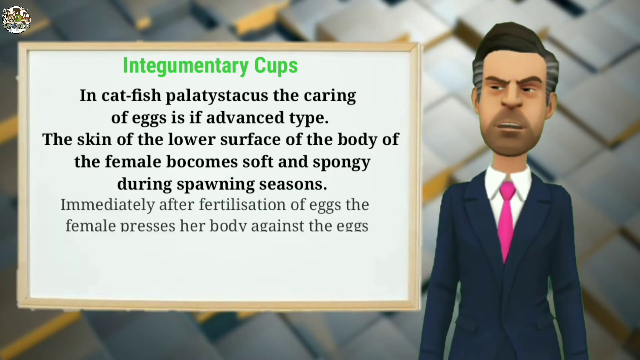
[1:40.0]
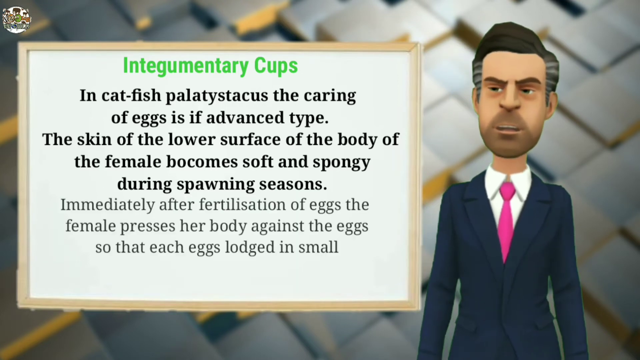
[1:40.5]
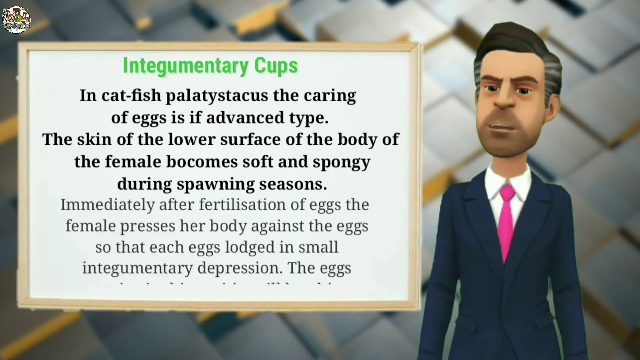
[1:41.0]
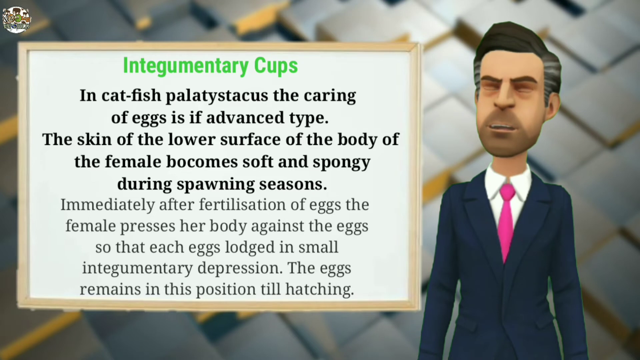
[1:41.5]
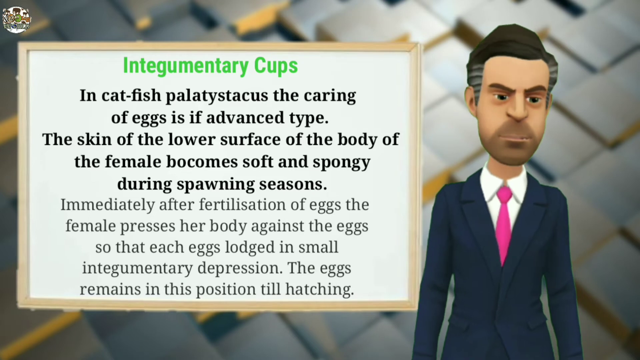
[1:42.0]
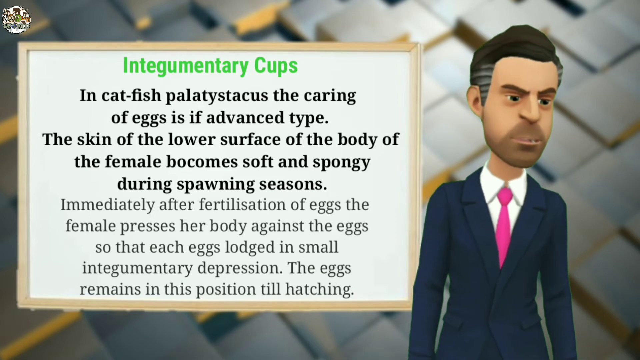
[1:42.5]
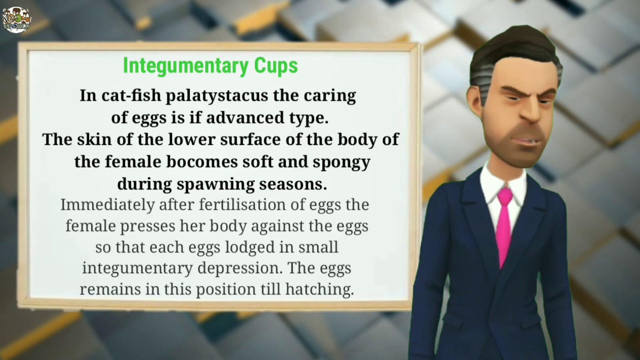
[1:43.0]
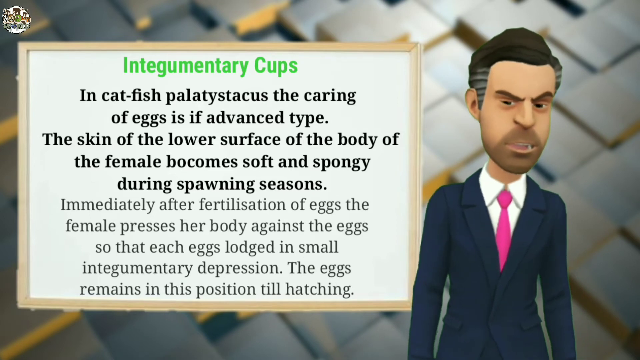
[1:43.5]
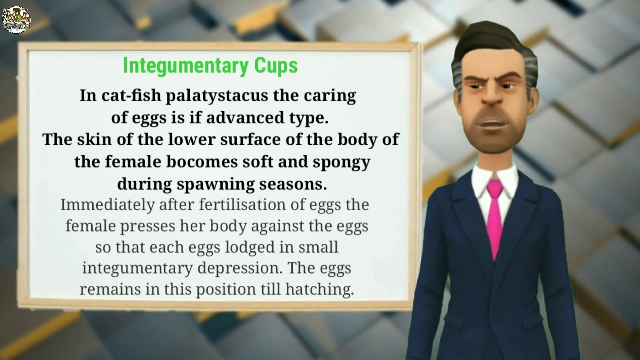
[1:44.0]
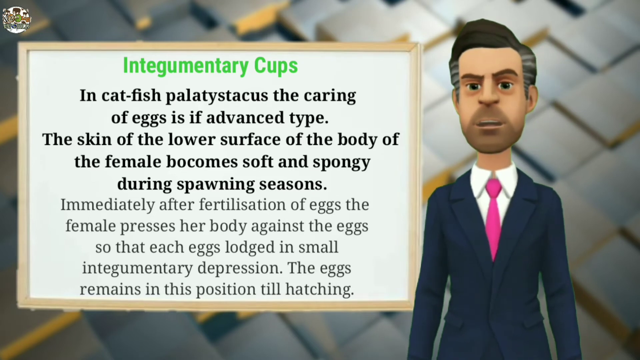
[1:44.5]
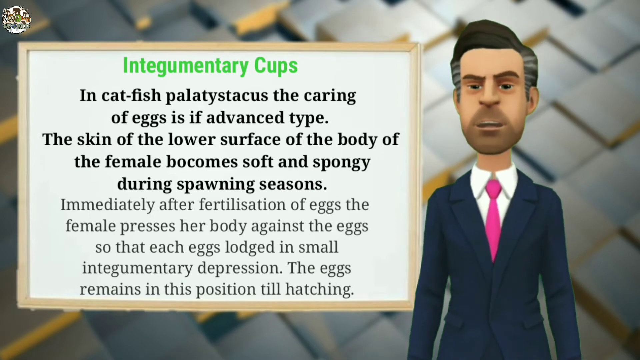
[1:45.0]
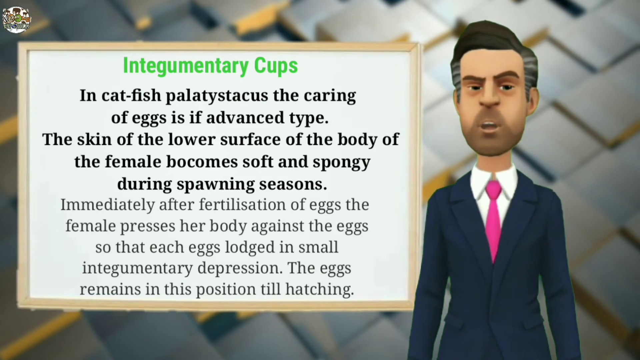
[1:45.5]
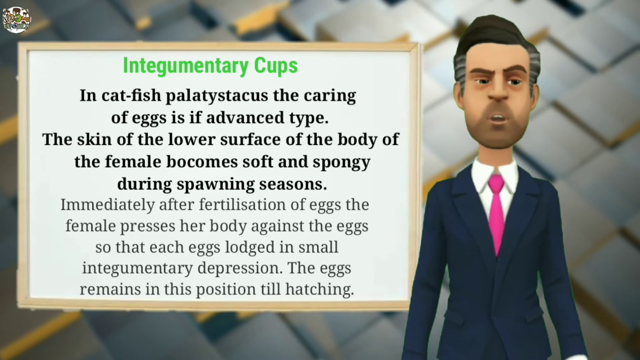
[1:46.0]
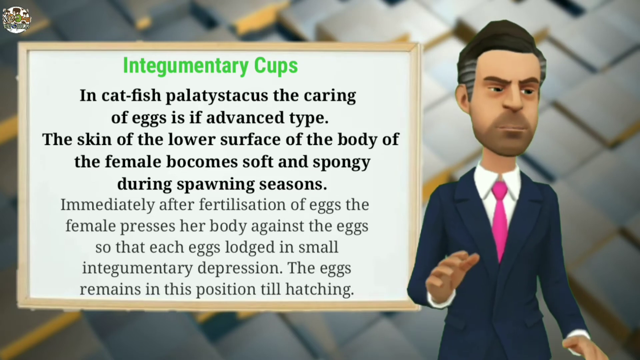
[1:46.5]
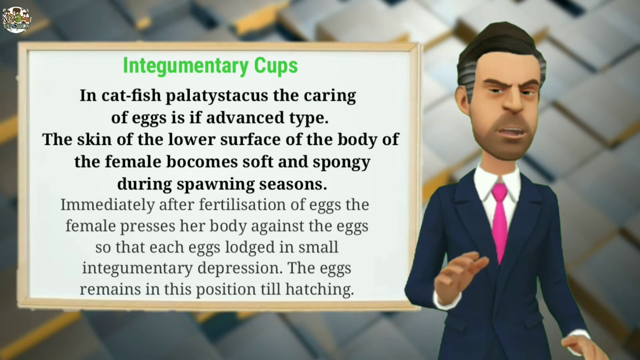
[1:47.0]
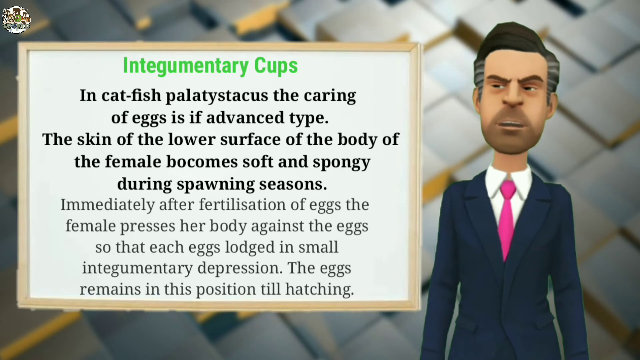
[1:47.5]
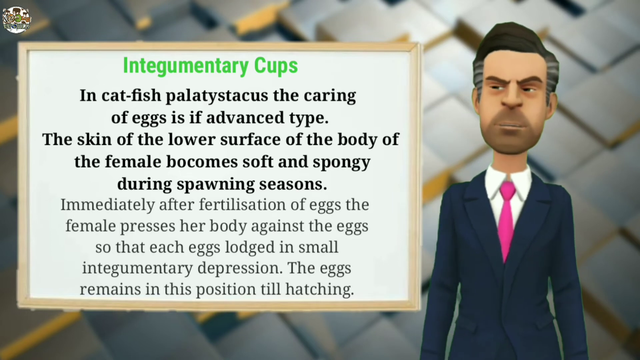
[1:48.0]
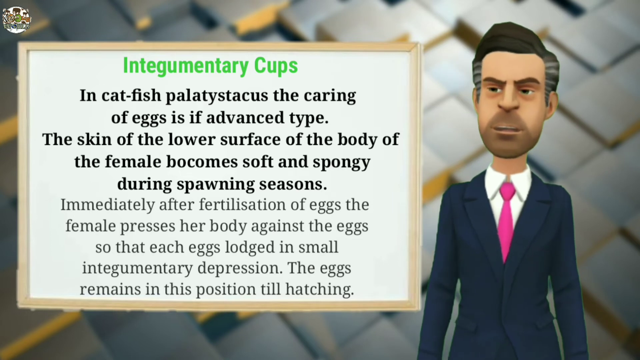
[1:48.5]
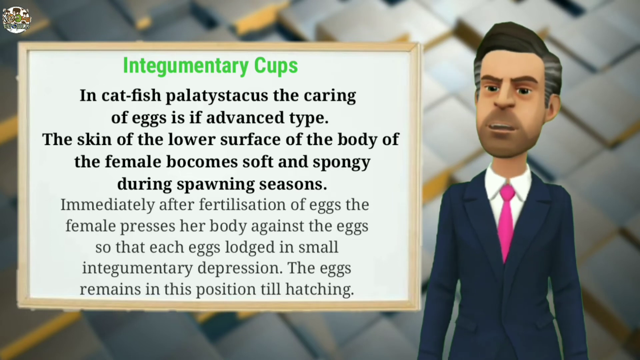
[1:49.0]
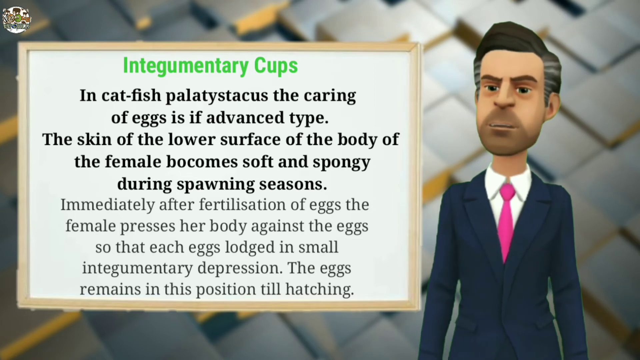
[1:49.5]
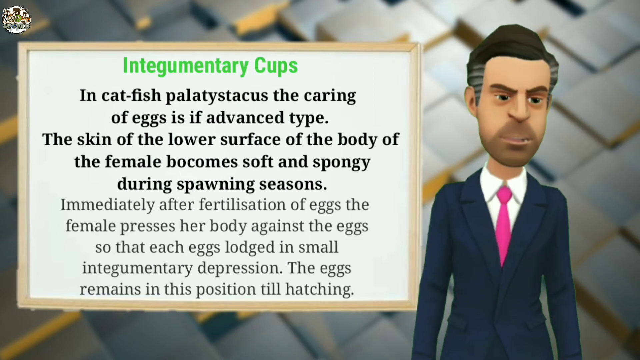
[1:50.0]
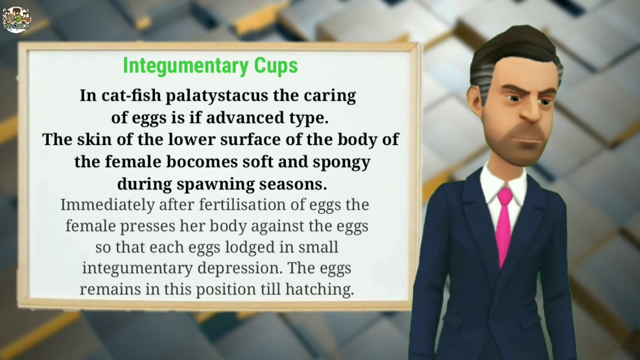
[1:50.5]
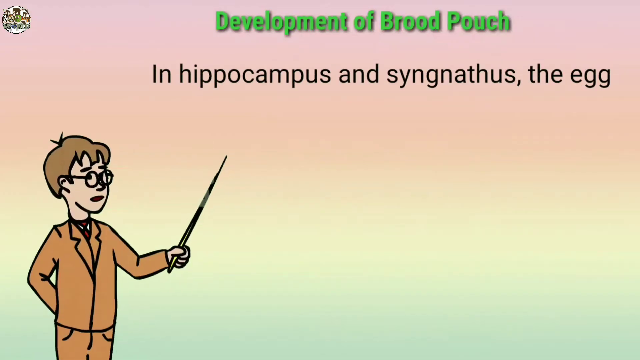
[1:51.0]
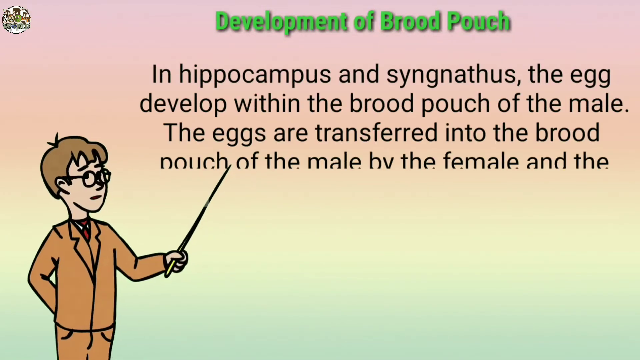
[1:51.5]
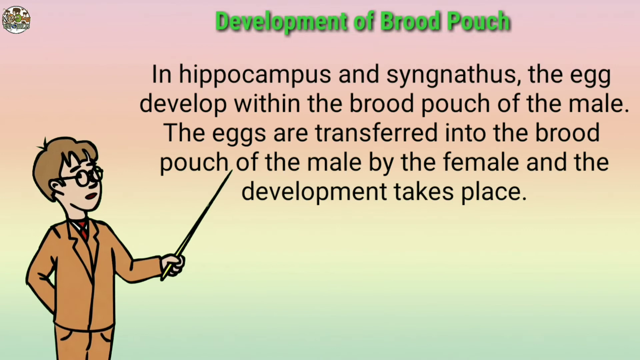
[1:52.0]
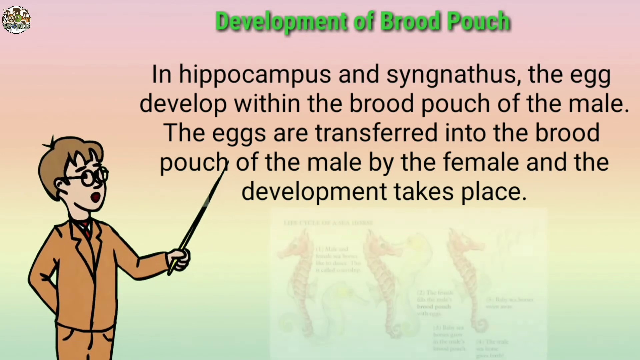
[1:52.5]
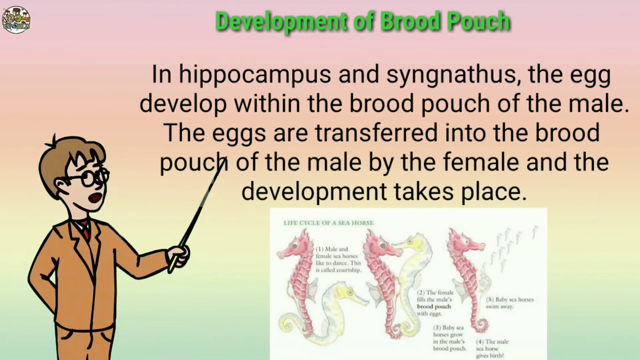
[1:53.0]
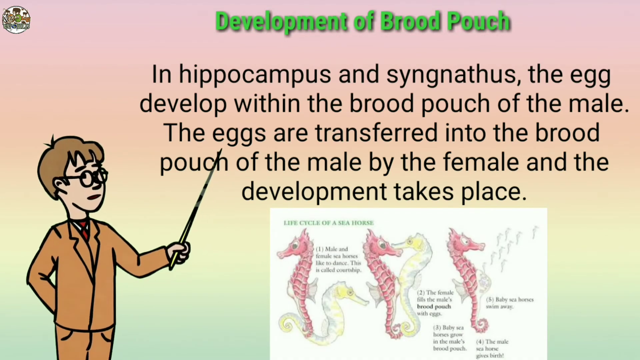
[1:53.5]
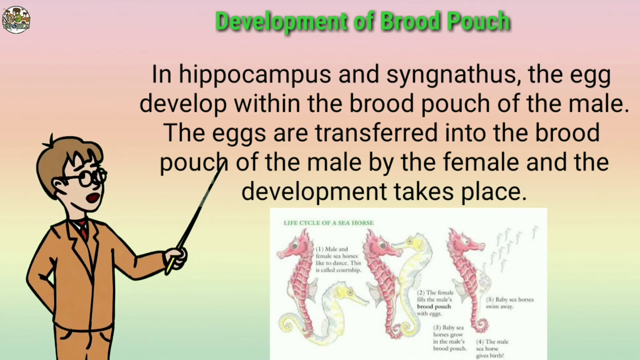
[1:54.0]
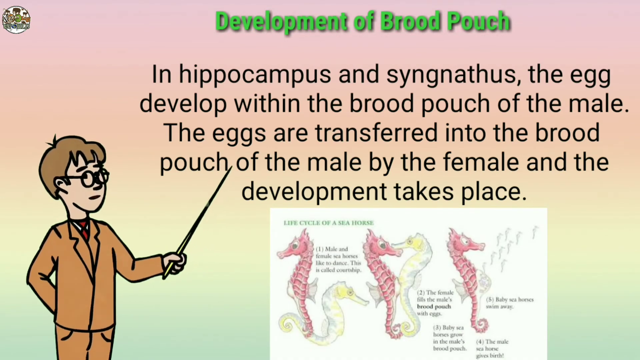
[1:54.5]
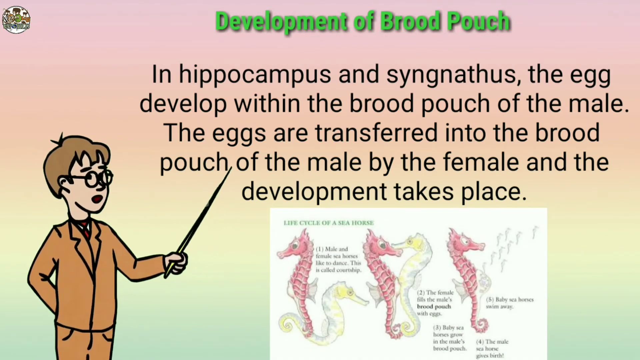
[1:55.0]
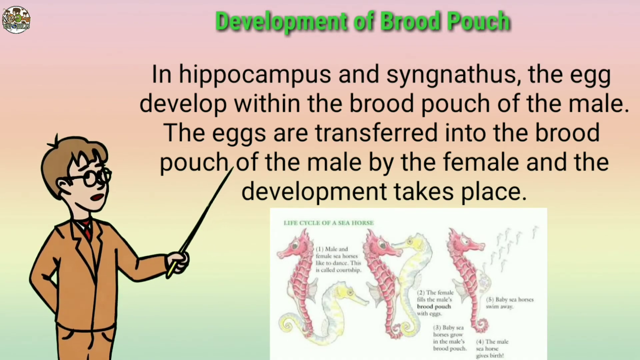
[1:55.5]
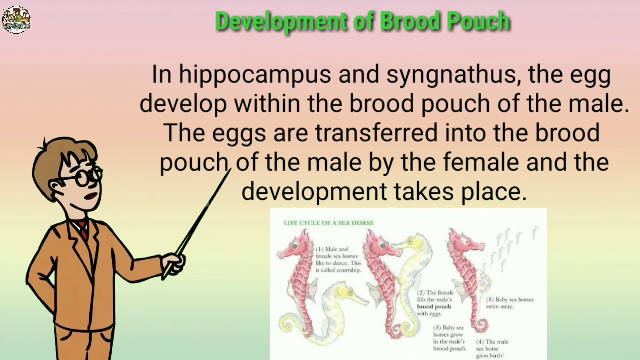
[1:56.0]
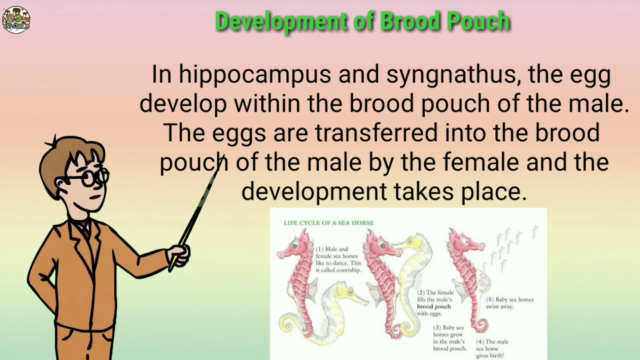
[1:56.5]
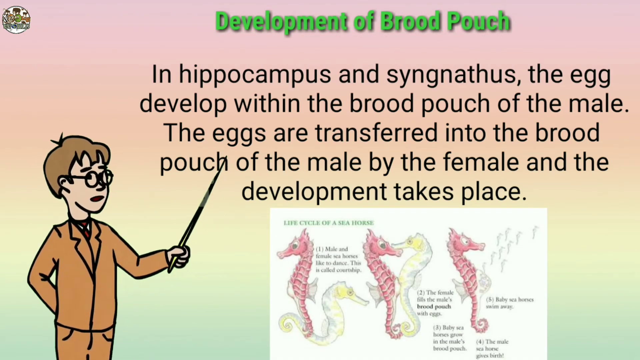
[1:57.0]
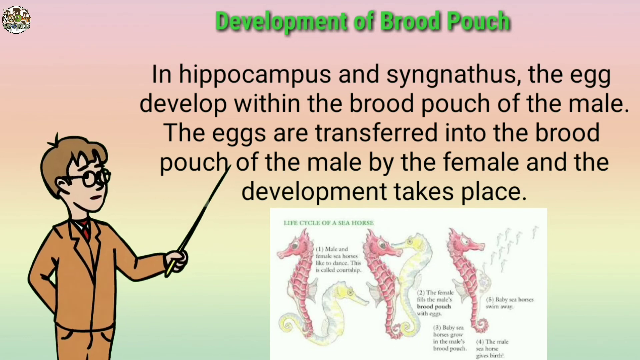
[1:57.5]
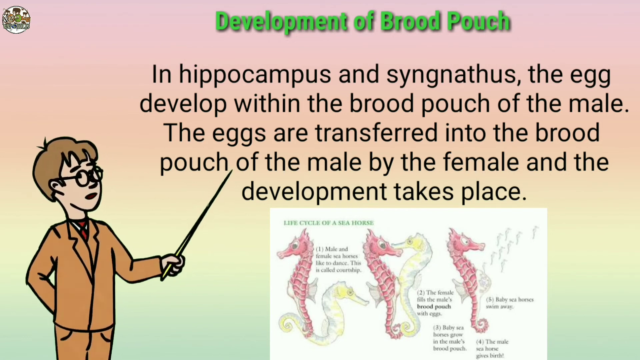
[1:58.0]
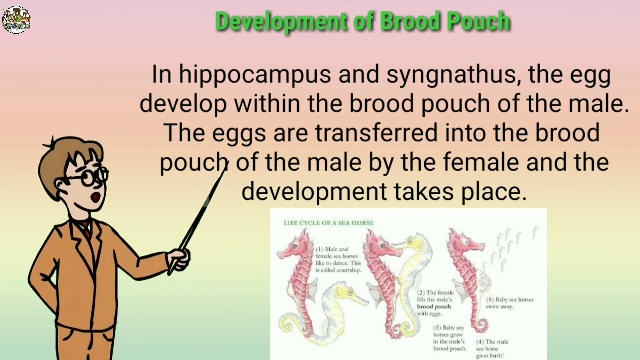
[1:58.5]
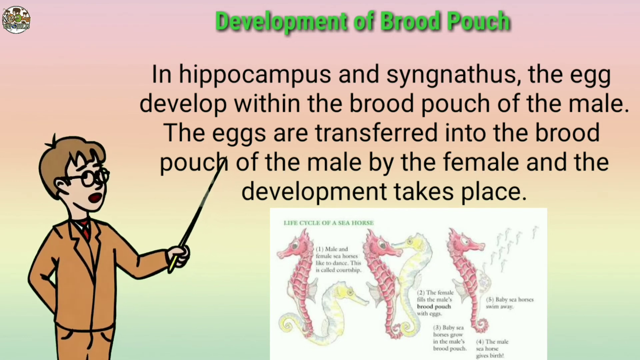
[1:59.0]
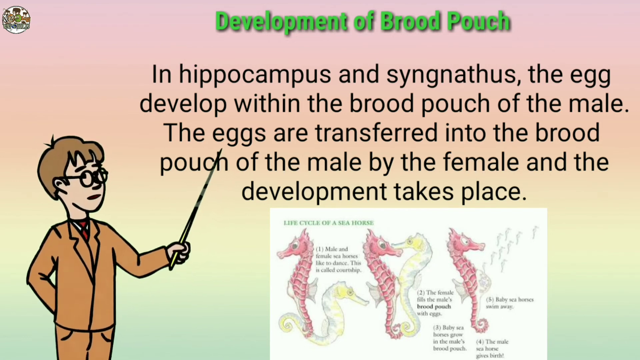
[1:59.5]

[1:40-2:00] The man has a scruffy beard and a little gray in his hair and is well styled; he wears a black suit, a white collared shirt and a pink tie. He introduces catfish. Text on the screen reads "the skin of the lower surface of the body of the female becomes soft and spongy during spawning seasons" and "Immediately after fertilization of the eggs, the female presses her body against the eggs." He has a serious look, kind of a scowl, while explaining things. Next comes a nerdy-looking fellow with glasses, with text about eggs developing within the brood pouch of the male and being transferred into it by the female. He holds up his hand as if teaching something.